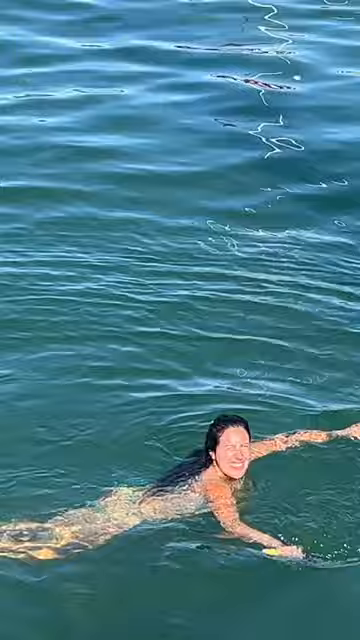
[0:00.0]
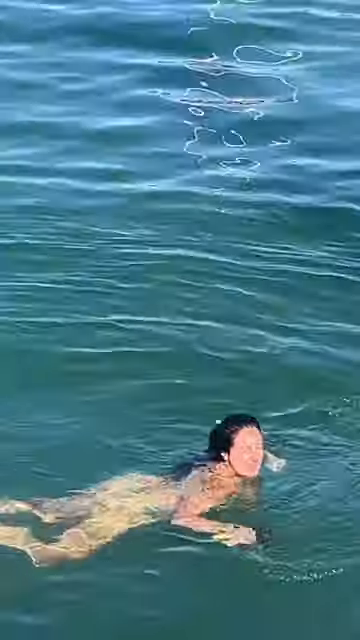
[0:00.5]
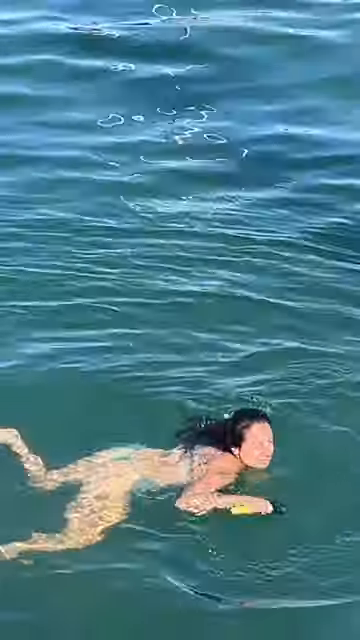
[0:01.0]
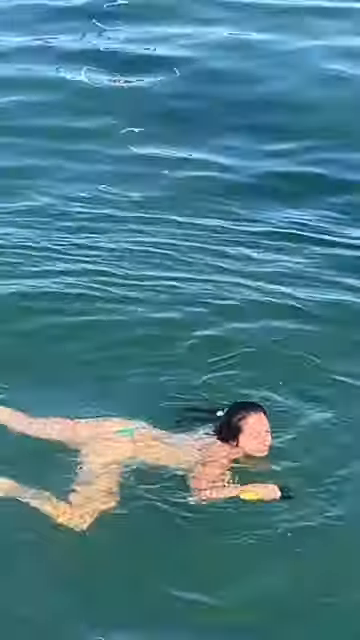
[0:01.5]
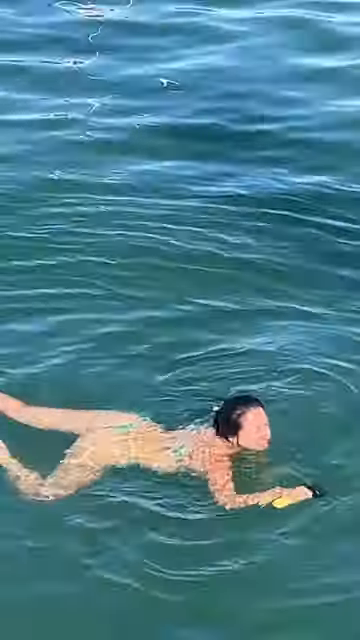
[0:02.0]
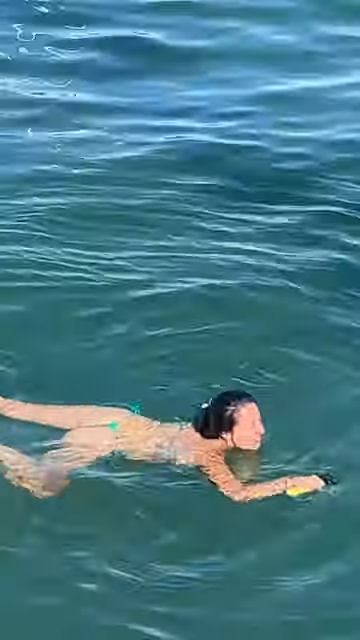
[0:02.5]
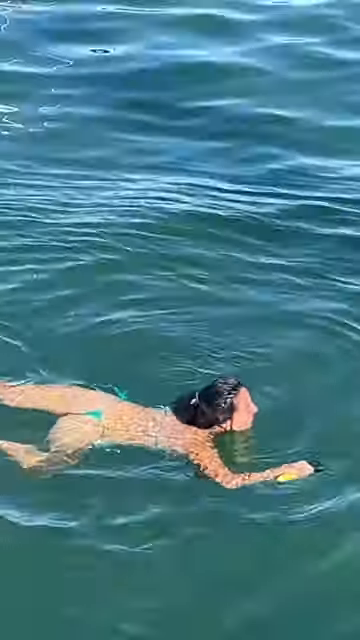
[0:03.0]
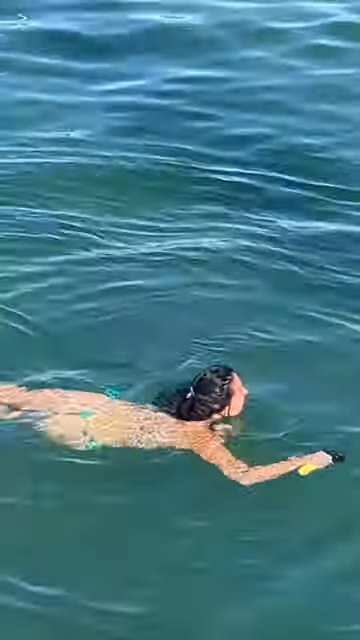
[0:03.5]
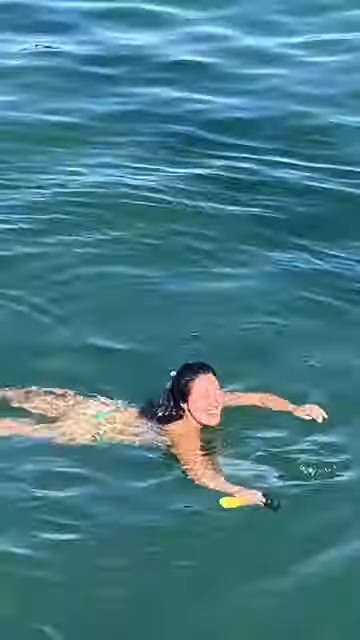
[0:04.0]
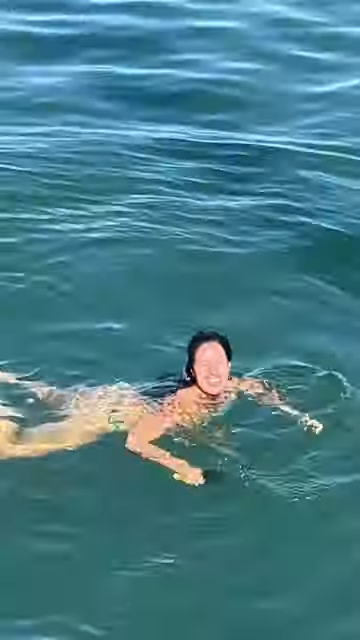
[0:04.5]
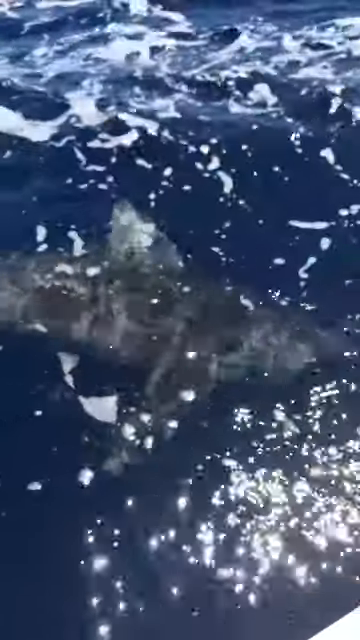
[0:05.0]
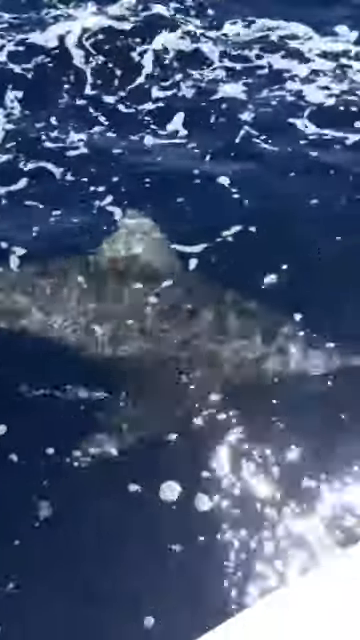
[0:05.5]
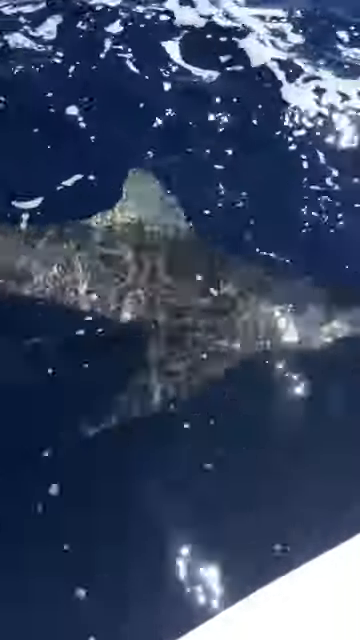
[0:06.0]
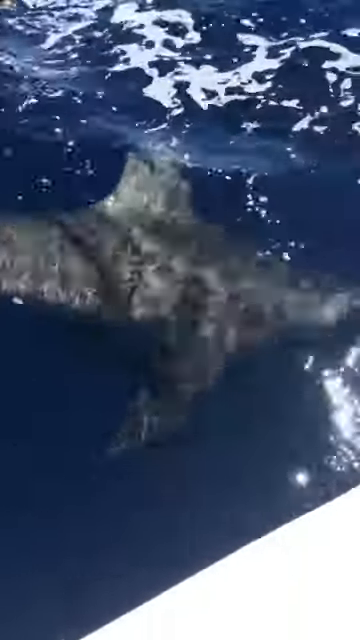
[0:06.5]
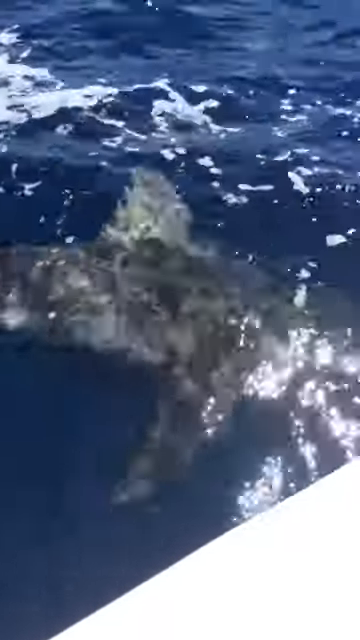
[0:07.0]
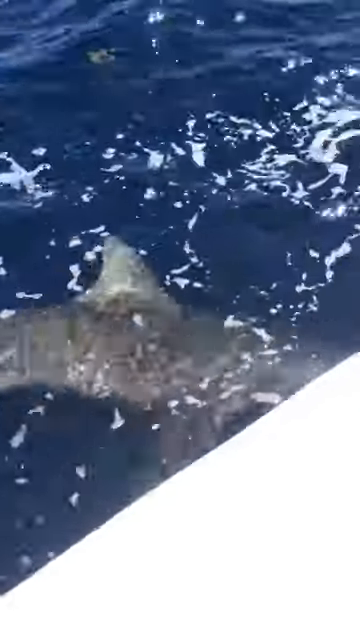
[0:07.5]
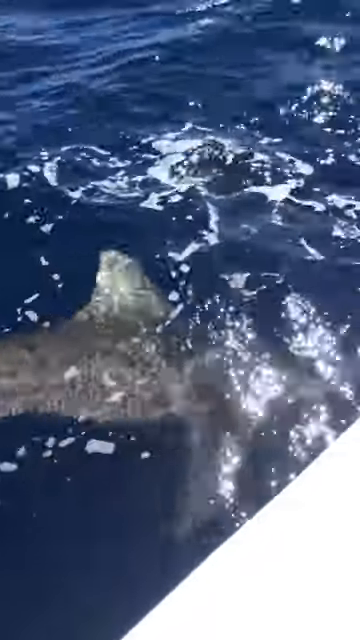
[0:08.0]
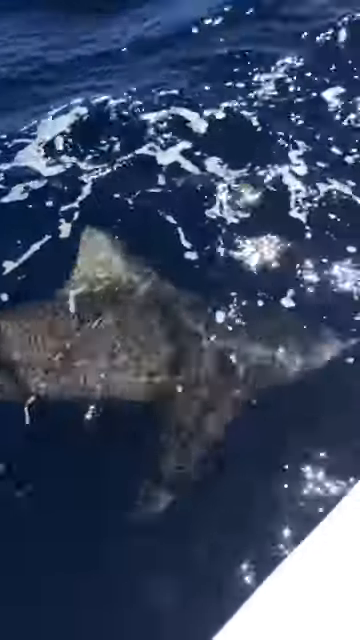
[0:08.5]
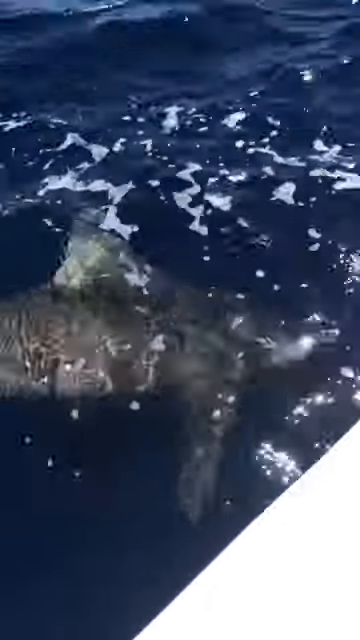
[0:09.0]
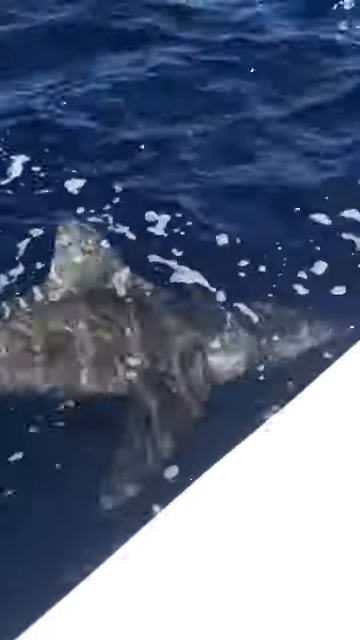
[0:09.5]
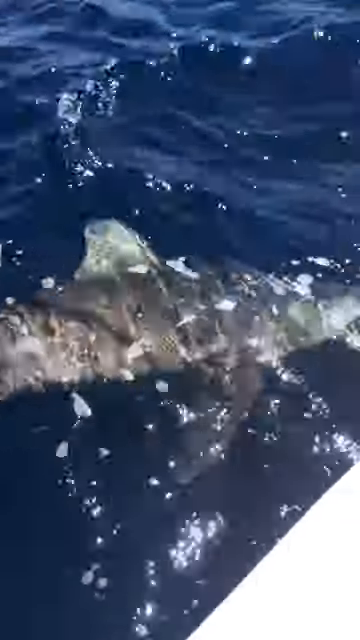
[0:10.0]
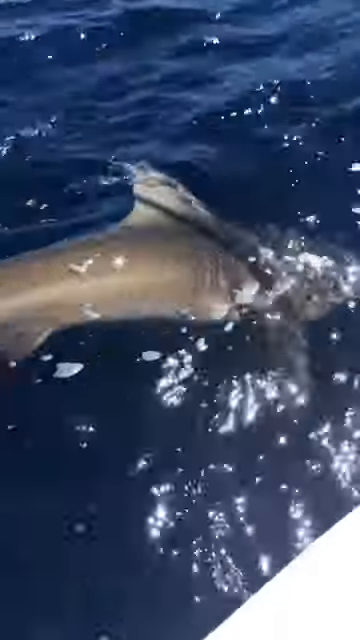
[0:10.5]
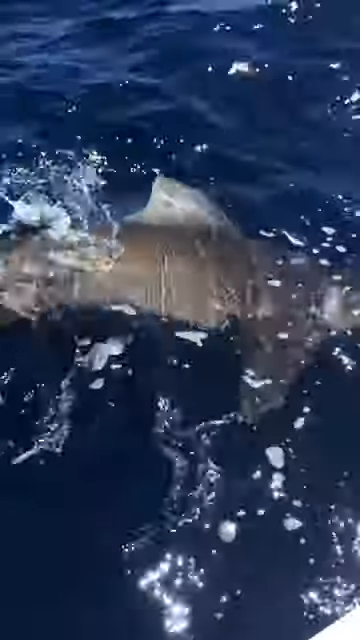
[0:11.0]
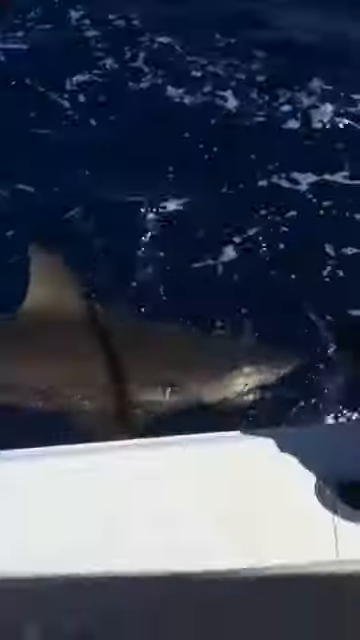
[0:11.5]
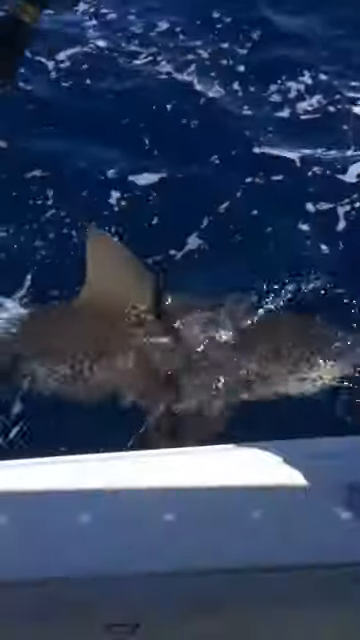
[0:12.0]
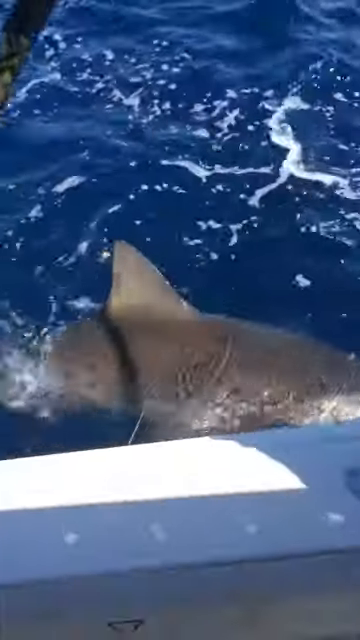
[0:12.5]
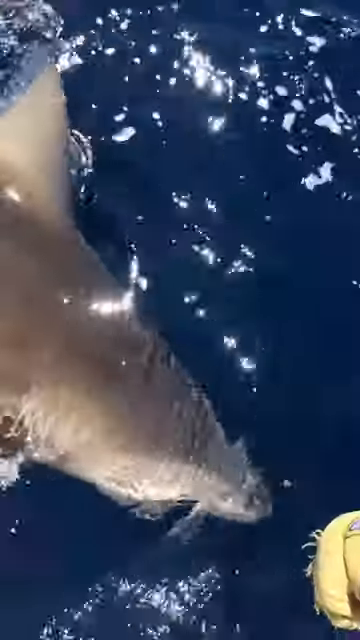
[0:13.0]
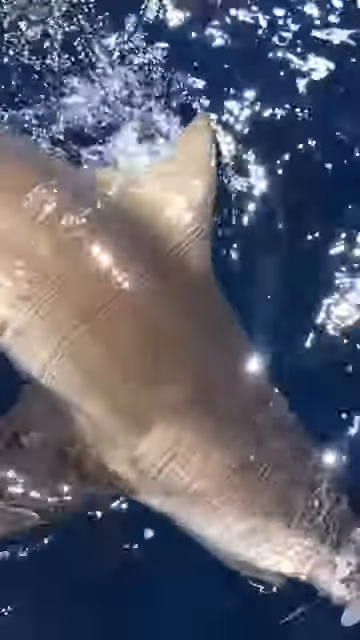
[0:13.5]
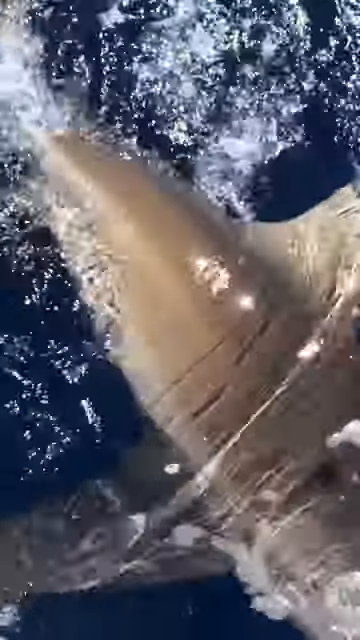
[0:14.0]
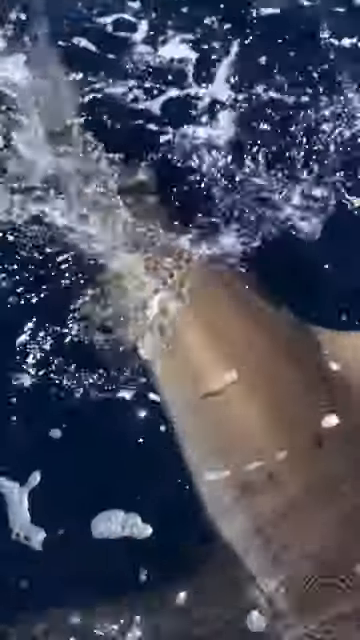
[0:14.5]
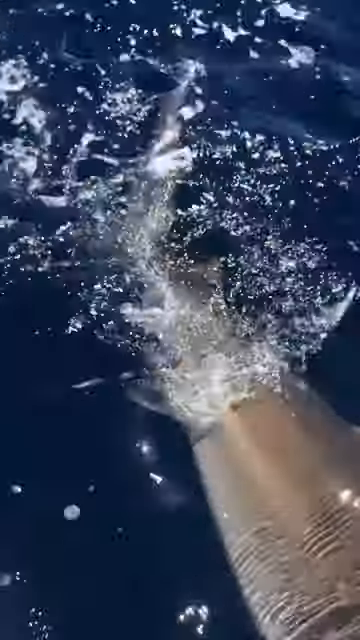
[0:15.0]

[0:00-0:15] The ocean is in view. A girl swims in the water and talks to some people on a boat. Suddenly a gray shark appears right up next to the boat. The shark appears to be hooked, as if it had been fished for, and it is pulled up alongside the boat. It is fairly large, looking about eight or nine feet long. A person reaches down, maybe to get the hook out of its mouth. The shark isn't fighting at all; it seems to have given up or worn itself out, and it kind of rides along the side of the boat. The shot of the girl keeps popping back up. She wears a very skimpy bathing suit and is basically kind of floating along the top of the water. She seems to be talking to somebody in the boat and is smiling. She holds something in her hand that might be a flashlight. Her water could be ocean or lake water, but the shark is definitely in the ocean.